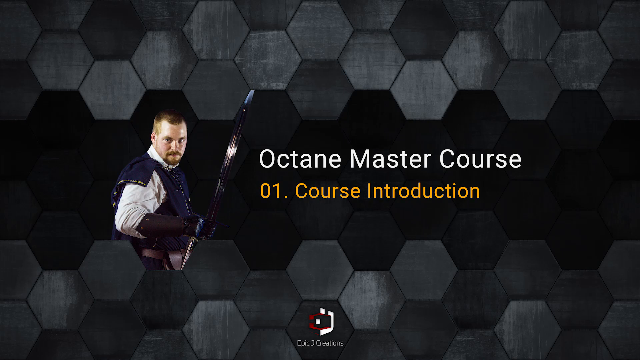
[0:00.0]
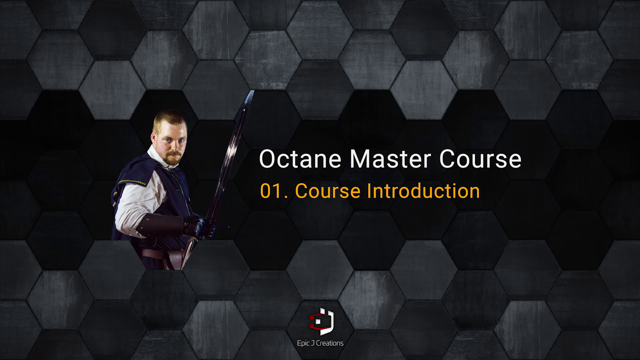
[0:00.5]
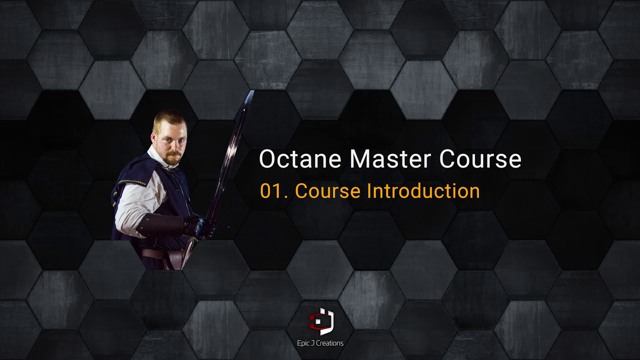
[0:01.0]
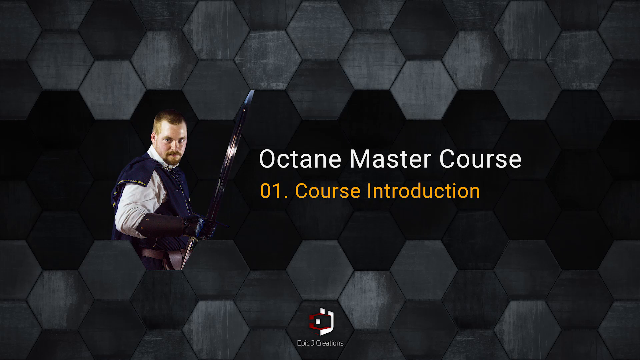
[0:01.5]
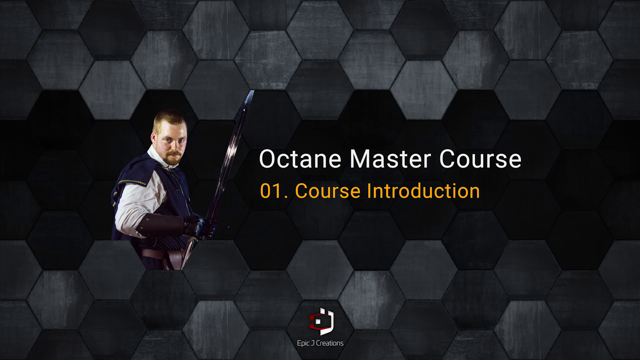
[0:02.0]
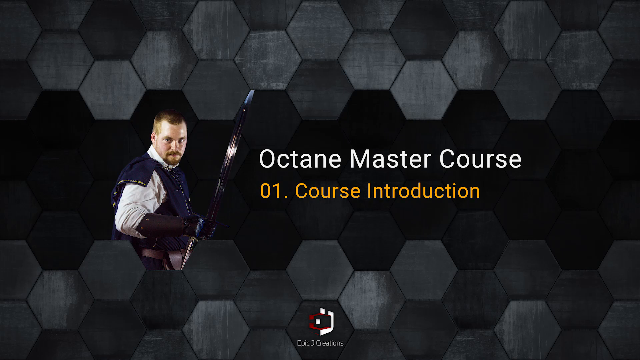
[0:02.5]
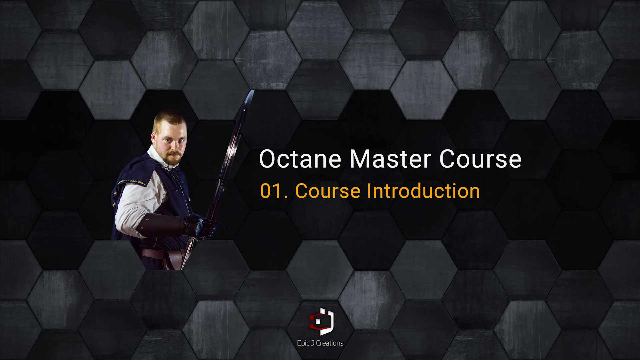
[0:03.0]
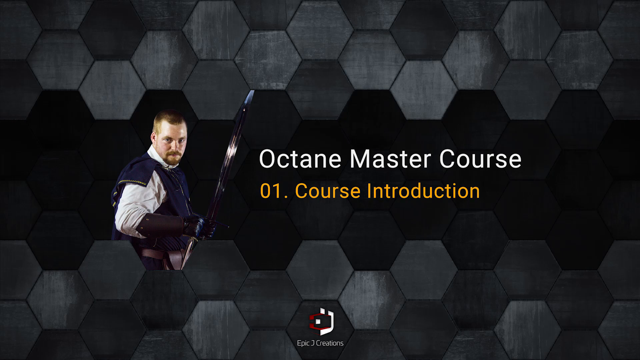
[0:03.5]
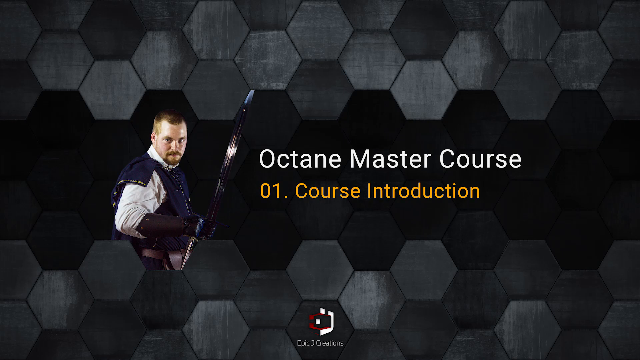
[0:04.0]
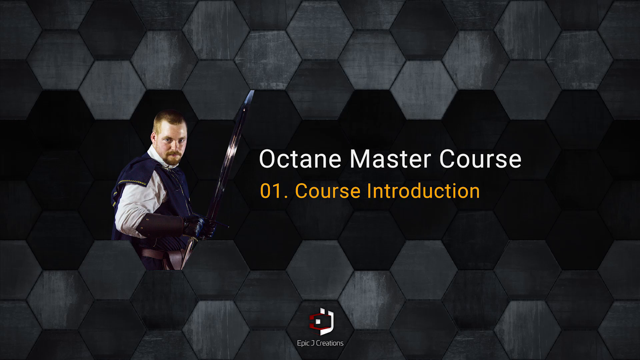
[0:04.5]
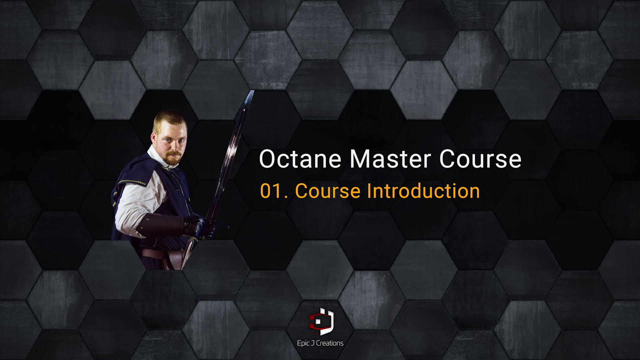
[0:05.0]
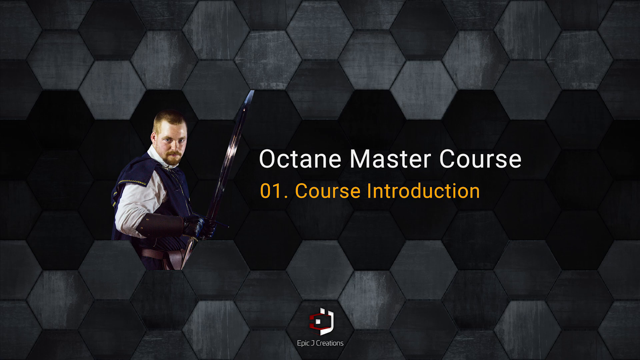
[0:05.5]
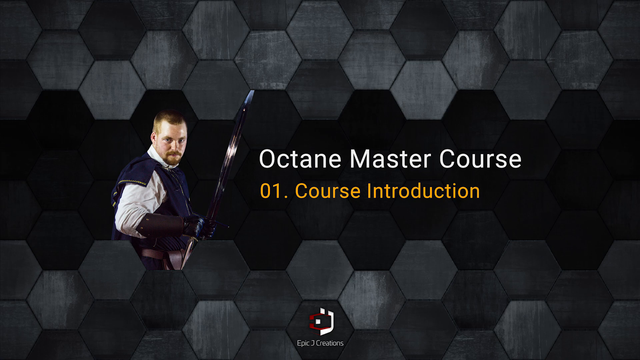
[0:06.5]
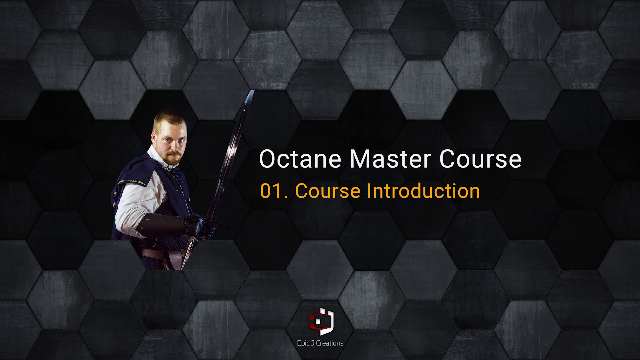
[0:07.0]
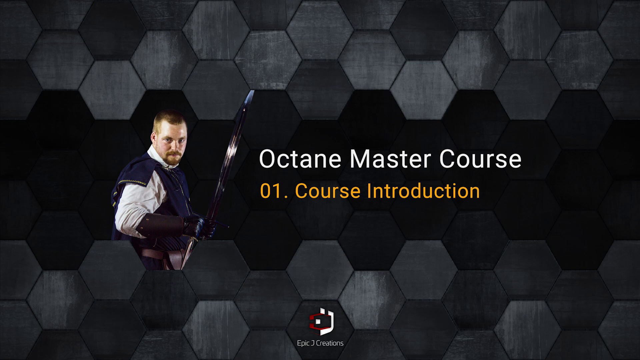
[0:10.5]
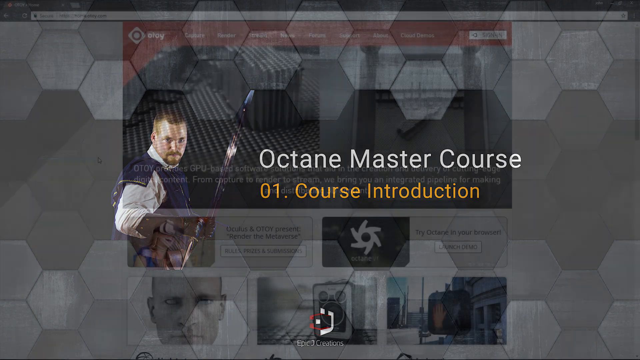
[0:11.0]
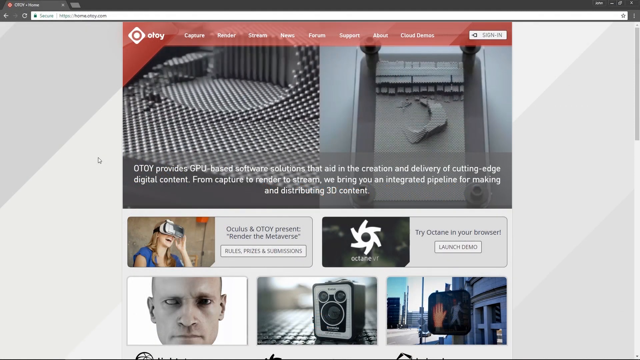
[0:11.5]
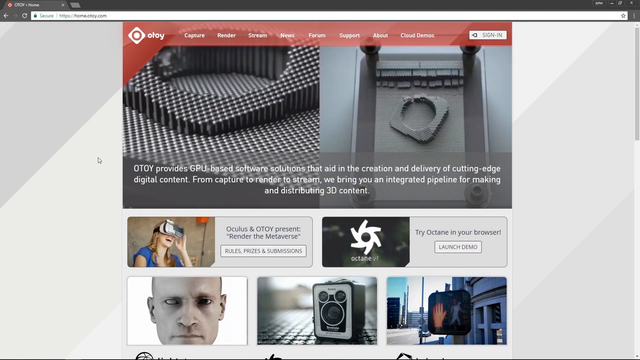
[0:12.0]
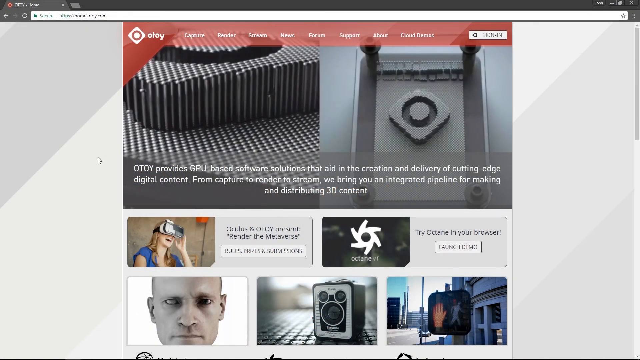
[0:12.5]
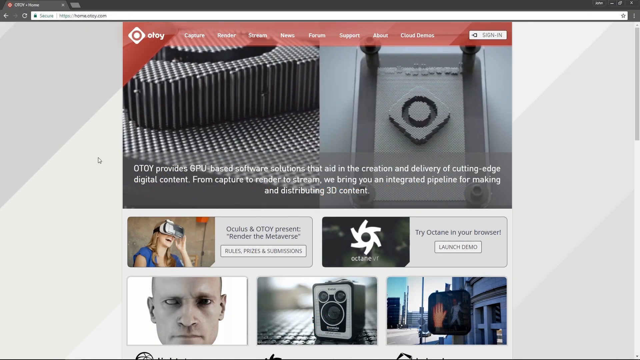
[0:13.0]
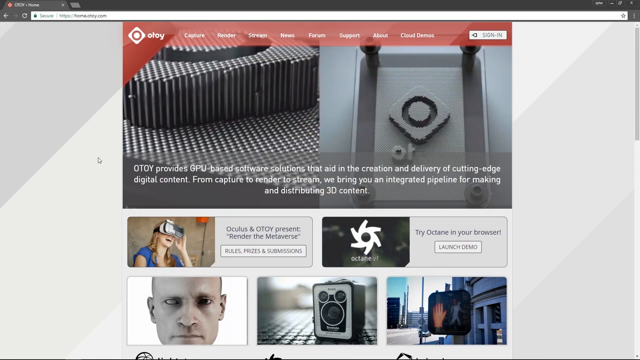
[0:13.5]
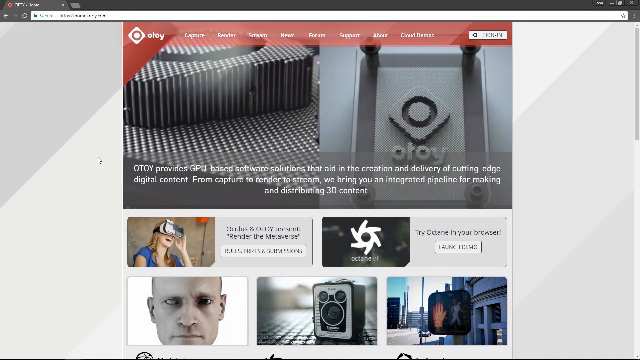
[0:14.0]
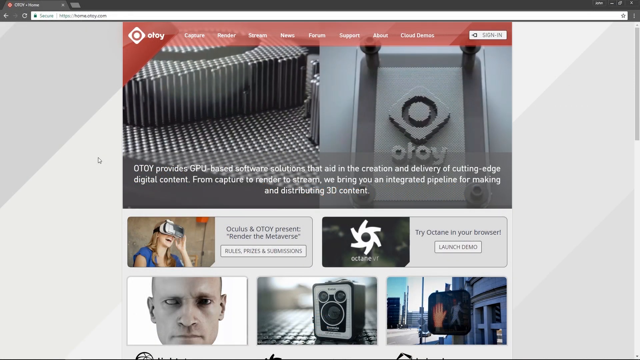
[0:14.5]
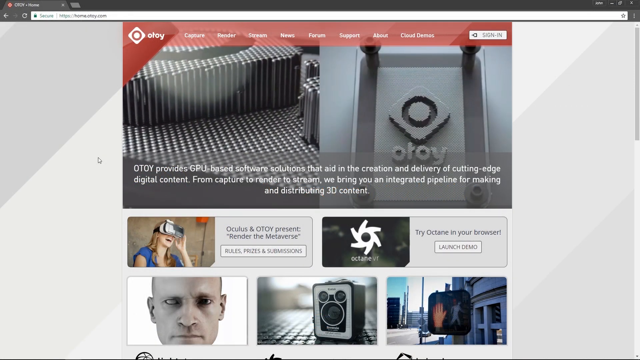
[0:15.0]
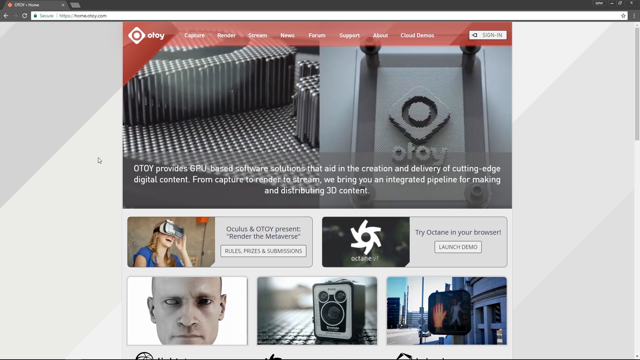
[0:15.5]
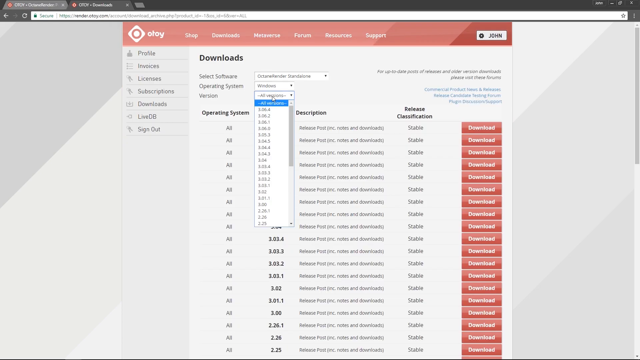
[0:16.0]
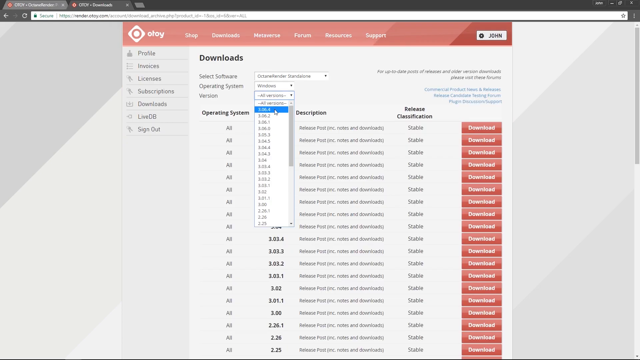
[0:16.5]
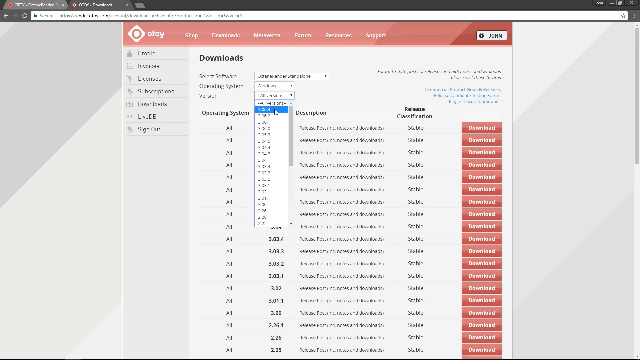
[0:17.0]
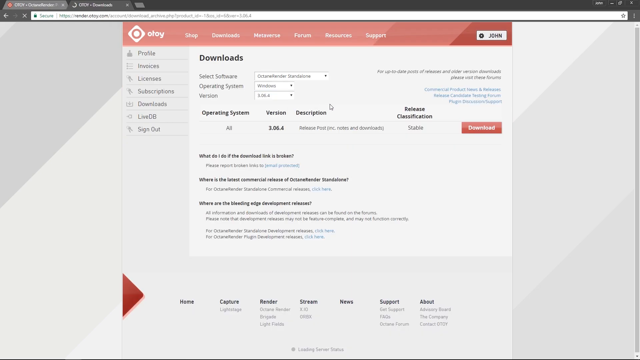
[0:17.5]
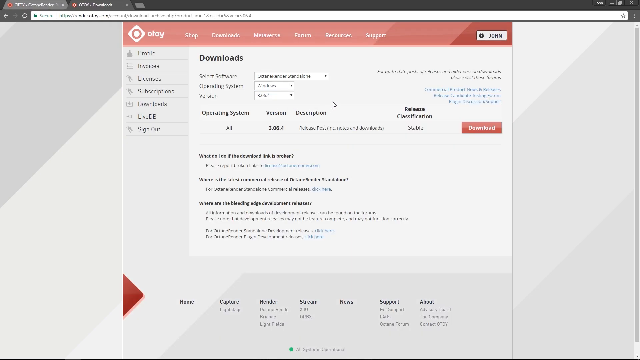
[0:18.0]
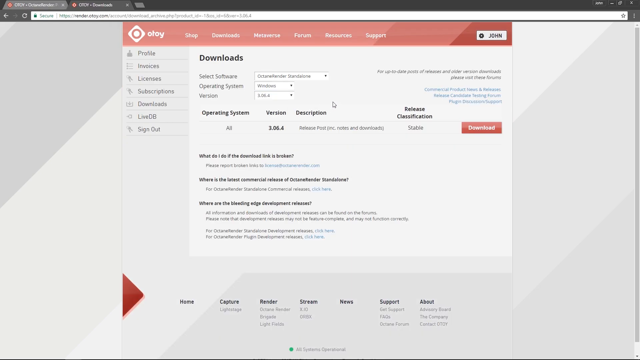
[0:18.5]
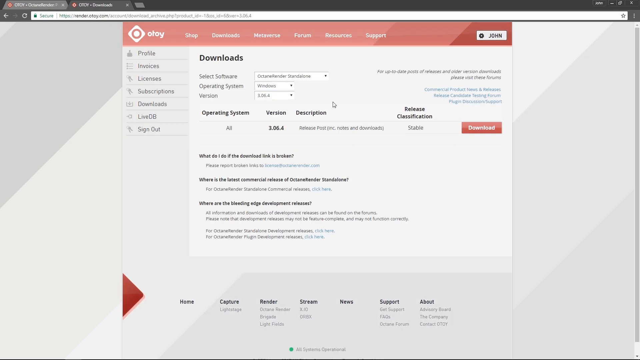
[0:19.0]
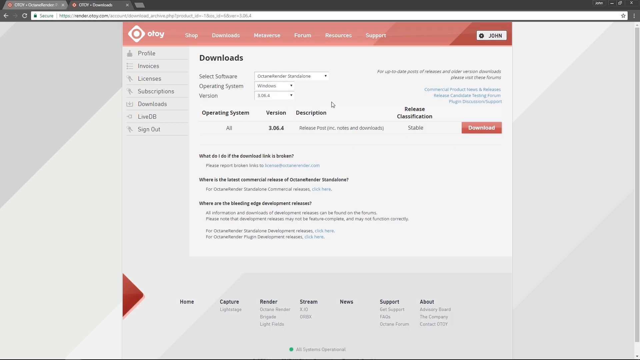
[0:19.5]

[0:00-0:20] The video opens on a background of gray and black hexagons, with the middle ones darker and the outer ones gray. A man in some gear, holding a sword, appears on the left side toward the center, and text on the right reads "Octane Master Course 01 Course Introduction". This intro fades into a website called OTOI. Its home screen shows various information, including that it provides GPU-based software solutions that aid in the creation and delivery of cutting-edge digital content. More information is visible on the page before the screen cuts to a downloads page. There, the version drop-down menu is open, and the mouse moves down and selects the top version. The list of other versions below closes, leaving only the selected one visible.